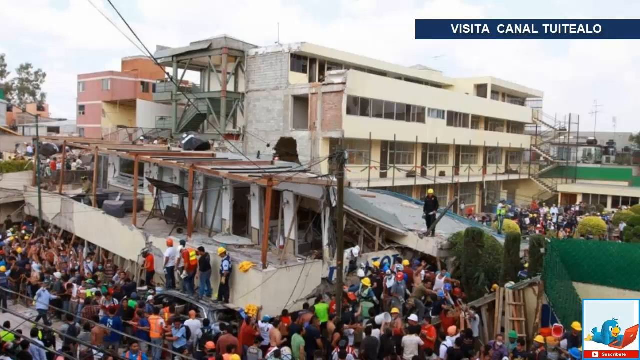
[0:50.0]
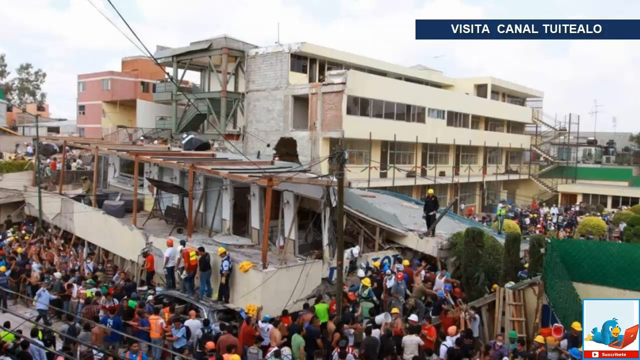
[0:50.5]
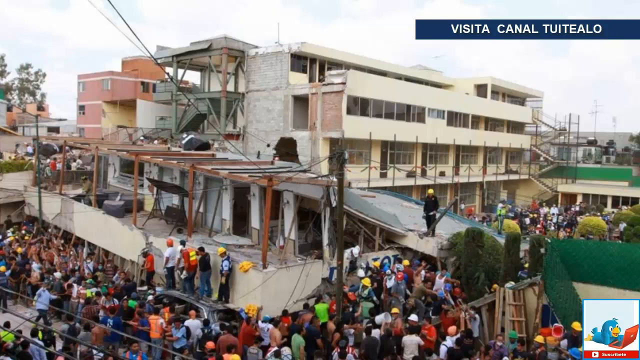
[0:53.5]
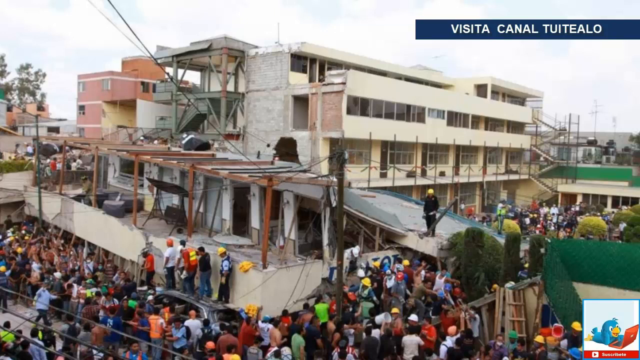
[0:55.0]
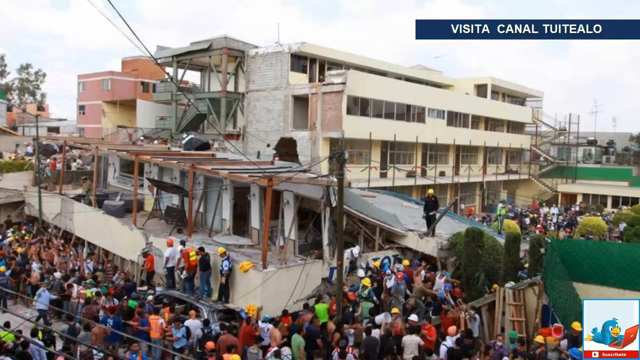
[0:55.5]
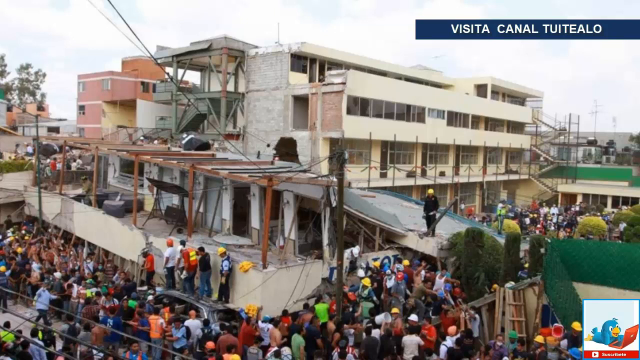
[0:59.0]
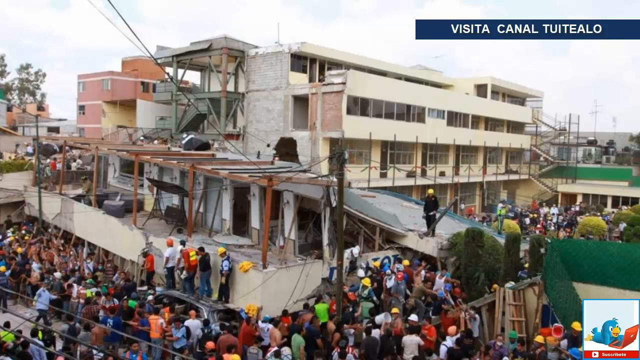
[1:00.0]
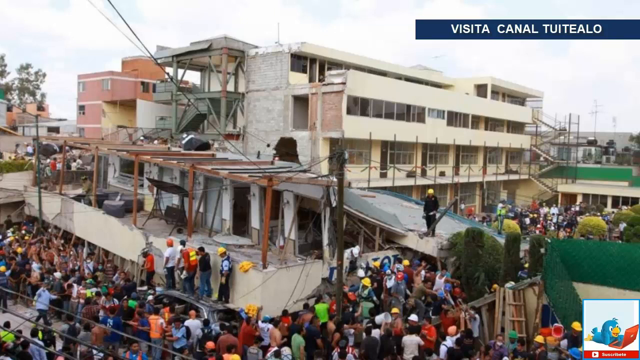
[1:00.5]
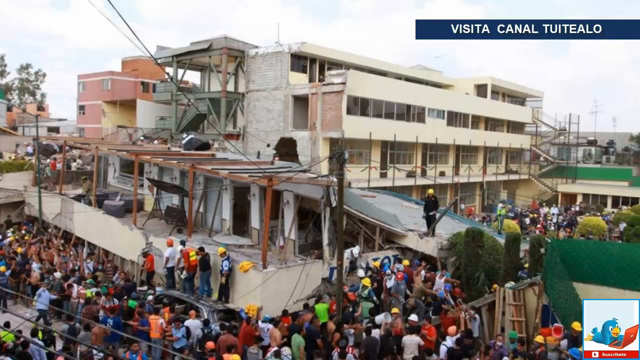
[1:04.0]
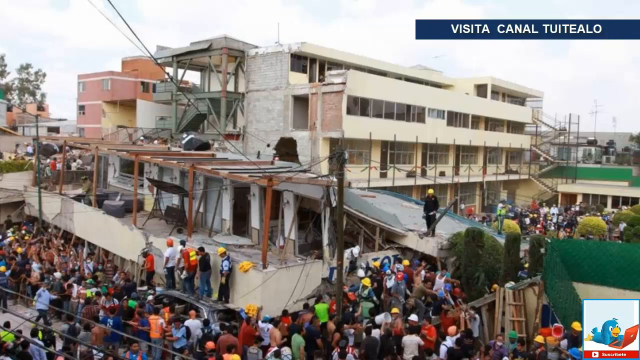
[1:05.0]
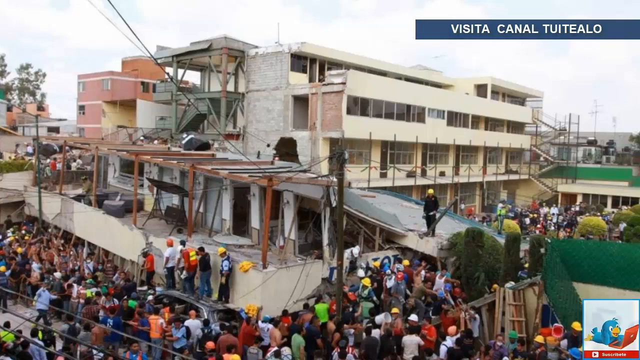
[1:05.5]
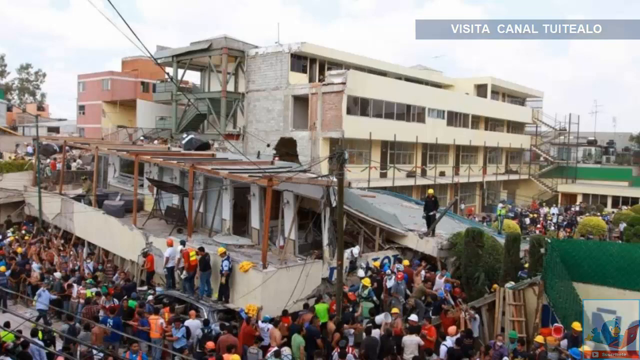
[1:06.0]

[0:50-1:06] A dilapidated structure appears to have collapsed, and there is a huge hole in the side of a building. The building is a light yellow with a staircase on the far end. Behind it is a building with green pillars, and behind that is another building painted orange. People are standing around the light yellow building, most of them wearing yellow construction hats. Some people have their hands up, almost as if in protest, while others hold buckets. Some individuals are standing atop a black car. The most prominent figure is a man standing atop the structure, wearing a black work suit with a yellow construction hat. There is greenery on the ground around it, suggesting it was possibly once a place where people lived. At the top right of the screen is a caption above a blue background that begins "Visita Canal".